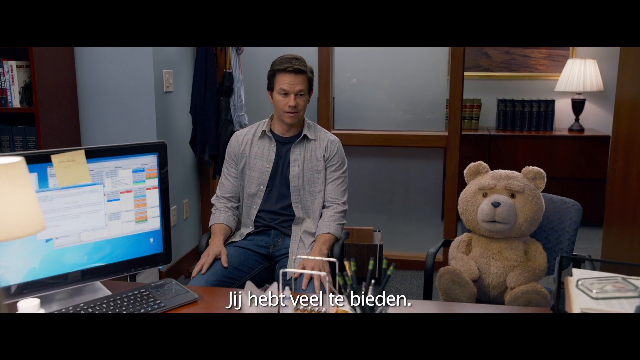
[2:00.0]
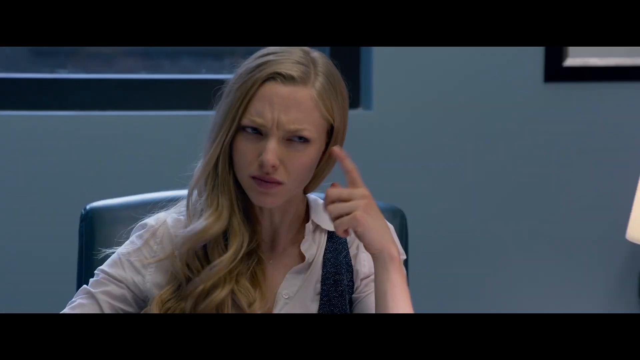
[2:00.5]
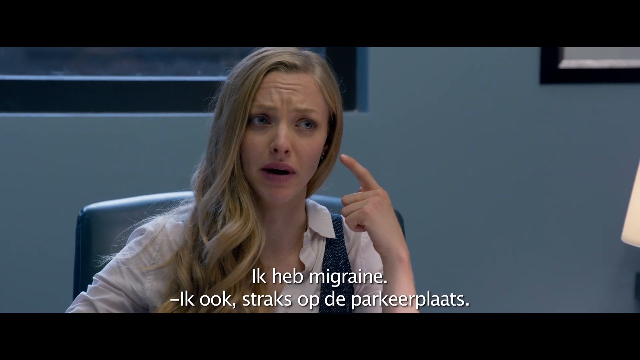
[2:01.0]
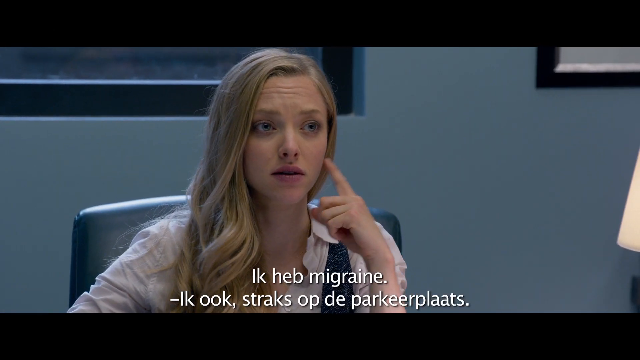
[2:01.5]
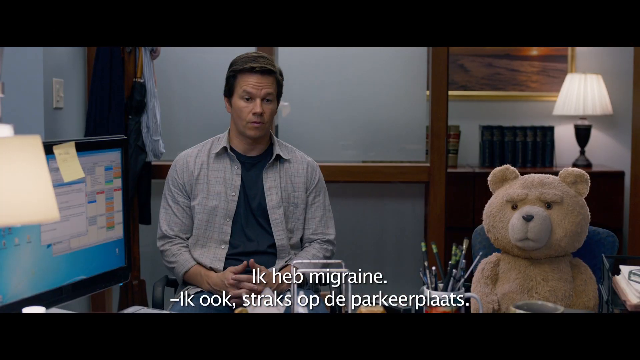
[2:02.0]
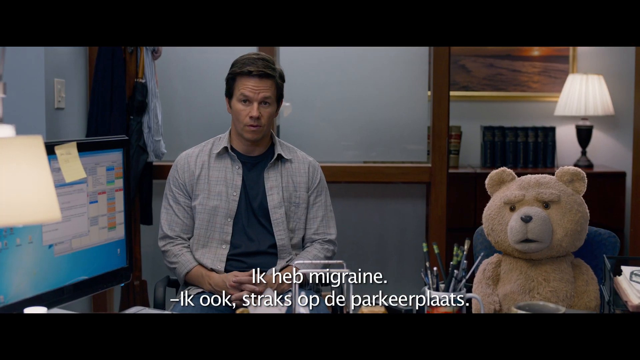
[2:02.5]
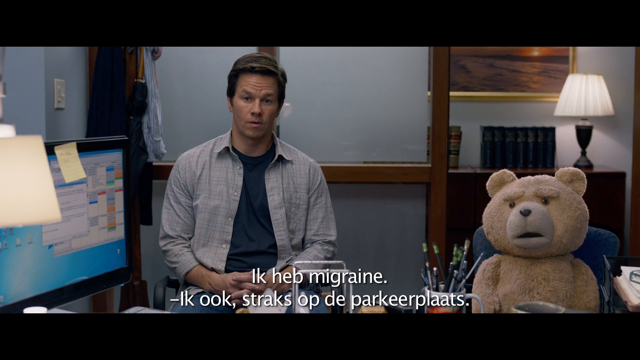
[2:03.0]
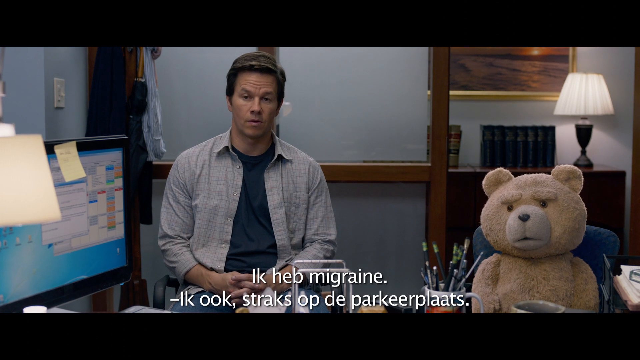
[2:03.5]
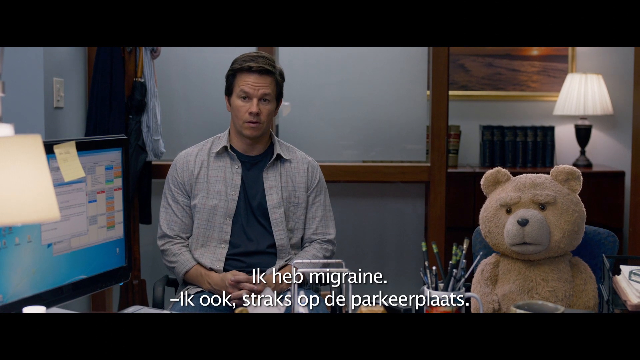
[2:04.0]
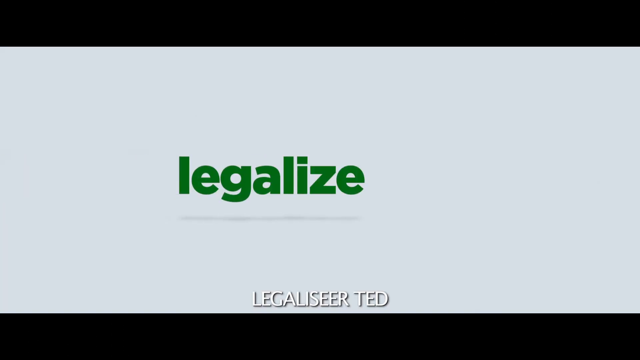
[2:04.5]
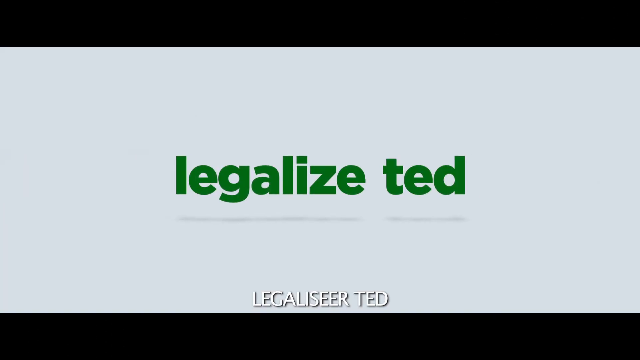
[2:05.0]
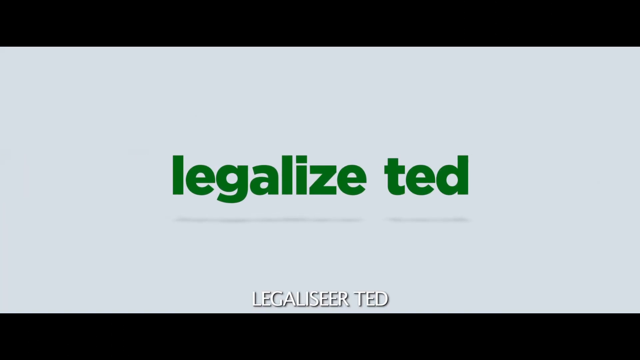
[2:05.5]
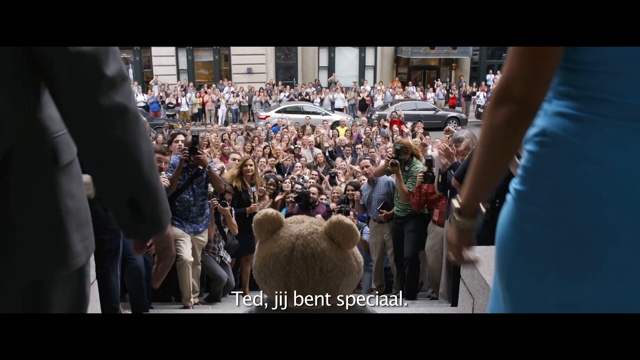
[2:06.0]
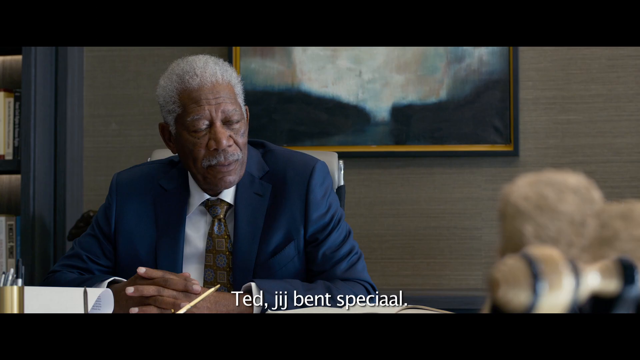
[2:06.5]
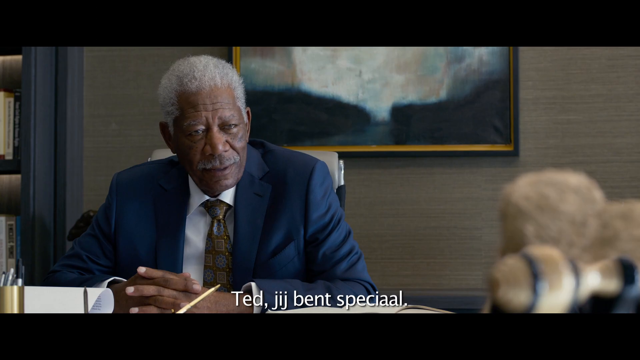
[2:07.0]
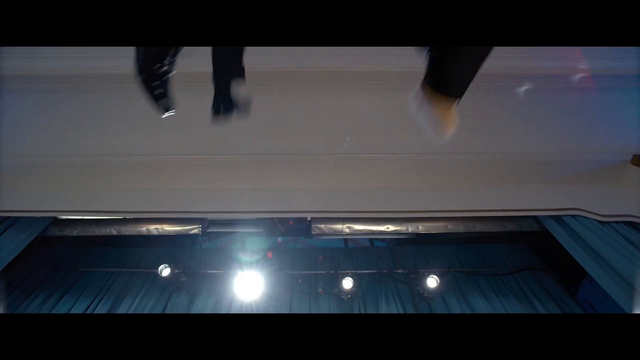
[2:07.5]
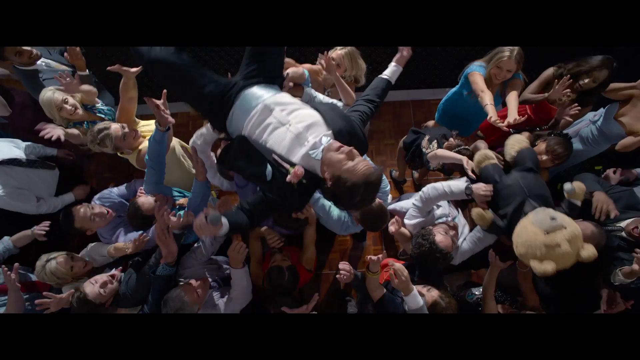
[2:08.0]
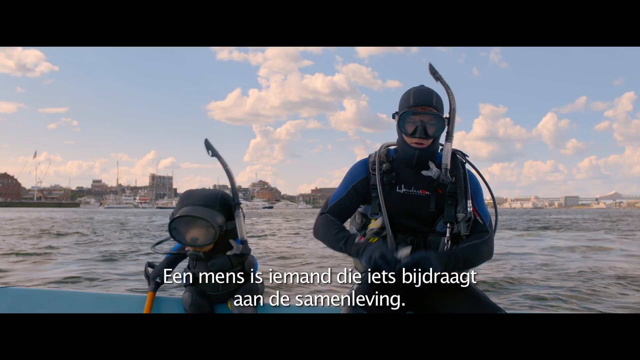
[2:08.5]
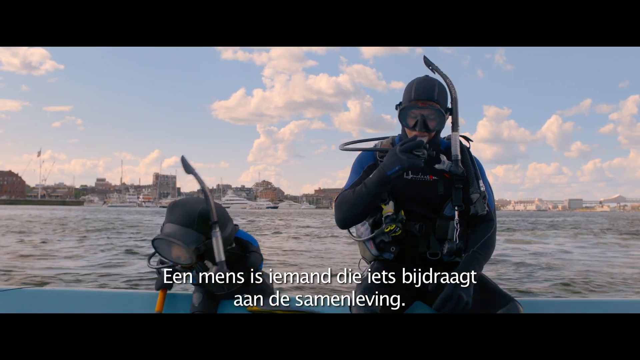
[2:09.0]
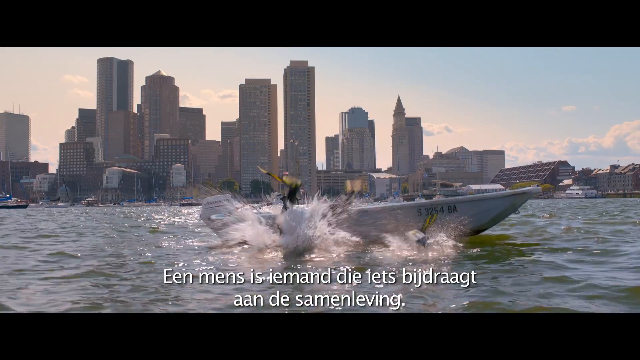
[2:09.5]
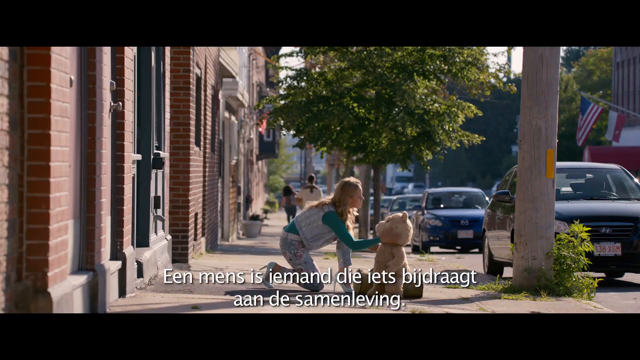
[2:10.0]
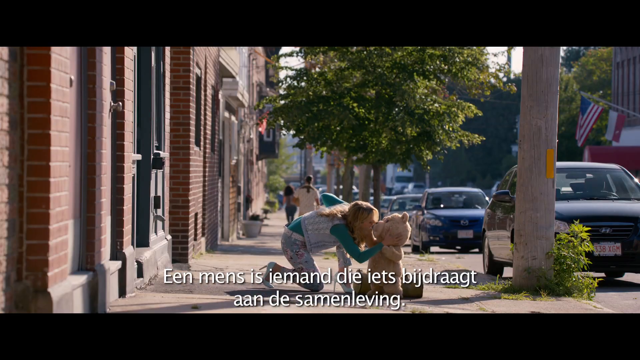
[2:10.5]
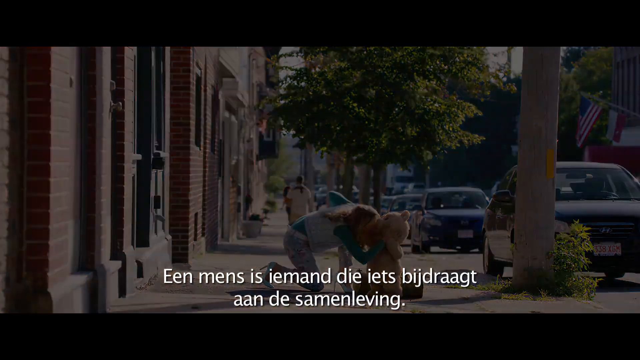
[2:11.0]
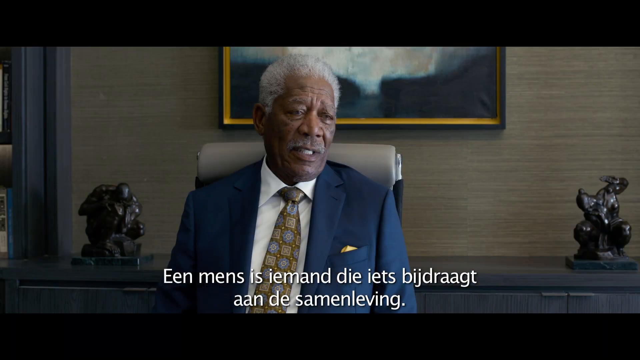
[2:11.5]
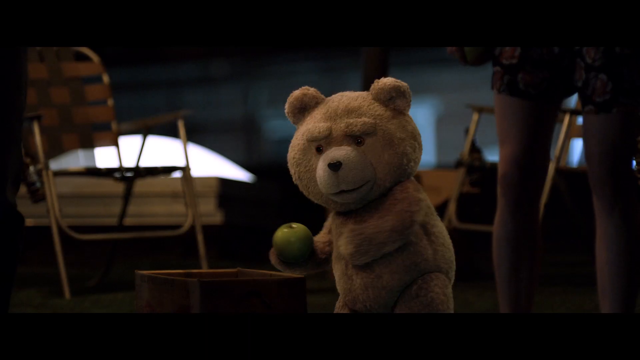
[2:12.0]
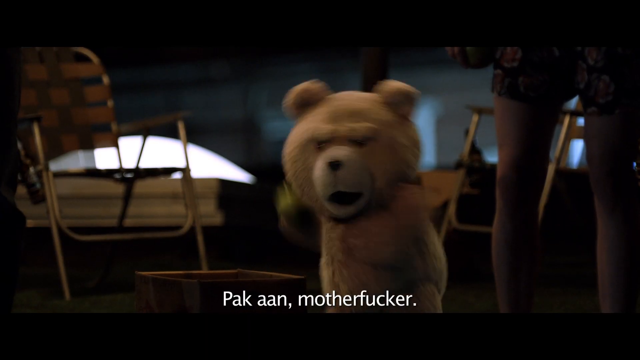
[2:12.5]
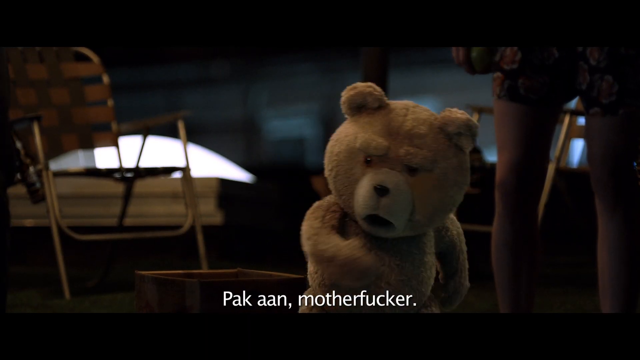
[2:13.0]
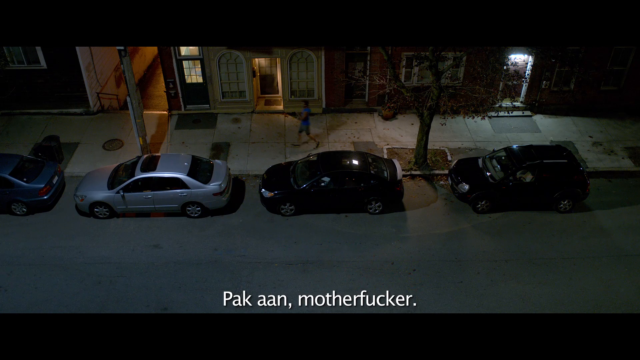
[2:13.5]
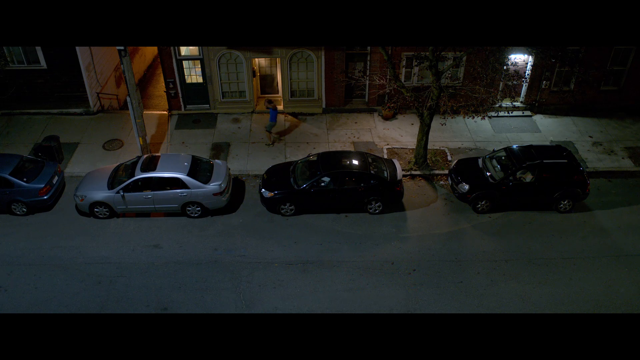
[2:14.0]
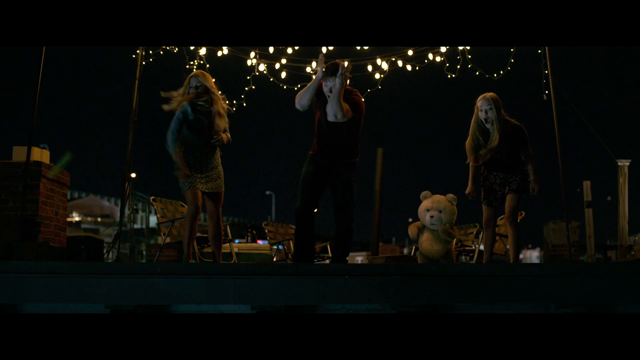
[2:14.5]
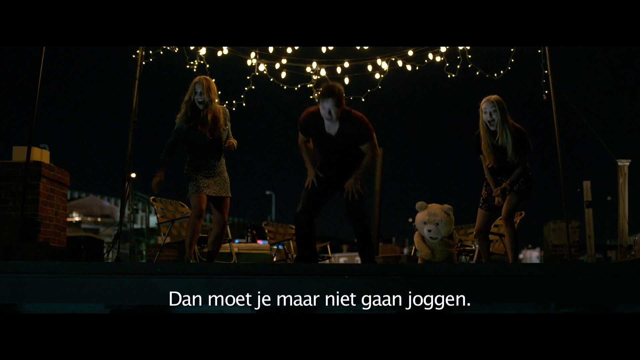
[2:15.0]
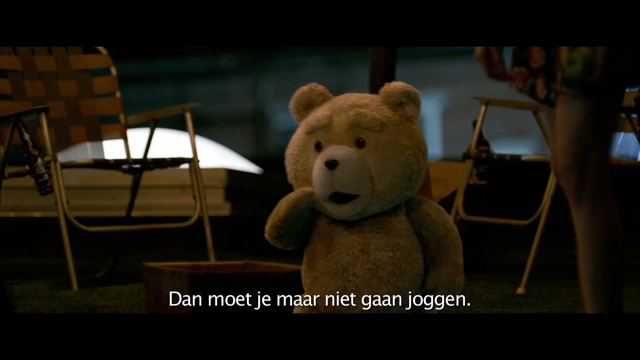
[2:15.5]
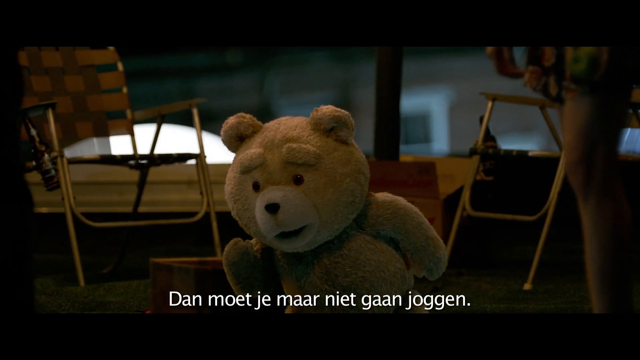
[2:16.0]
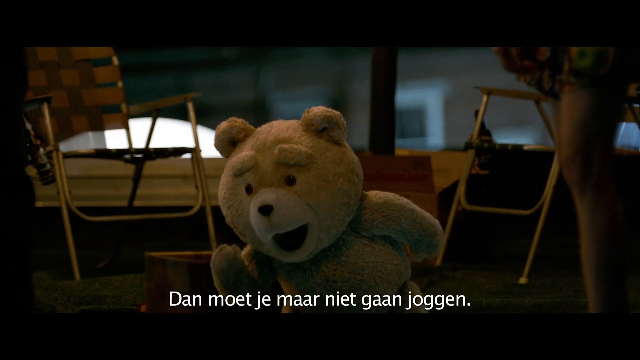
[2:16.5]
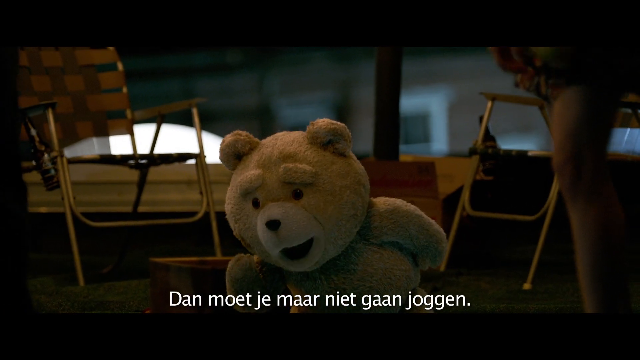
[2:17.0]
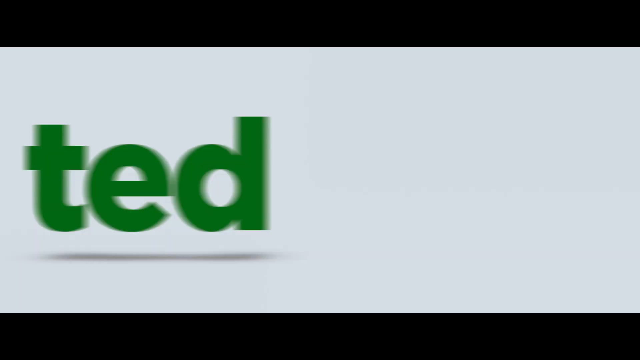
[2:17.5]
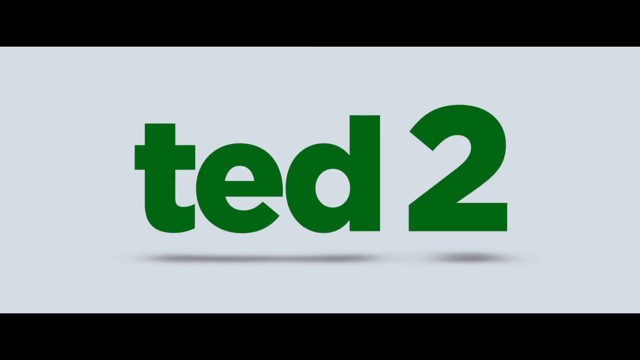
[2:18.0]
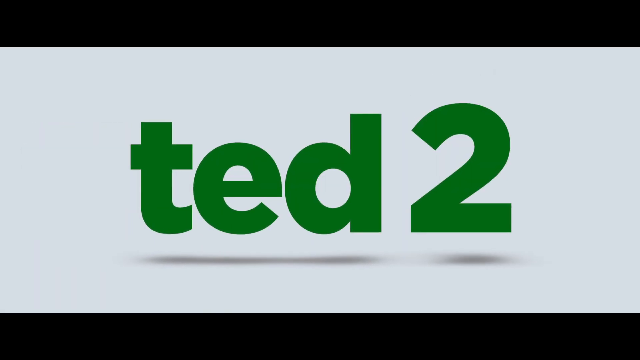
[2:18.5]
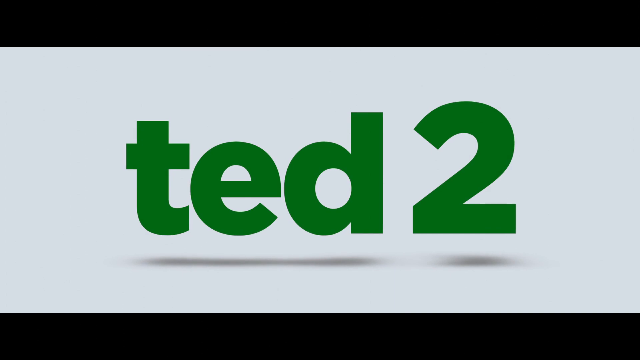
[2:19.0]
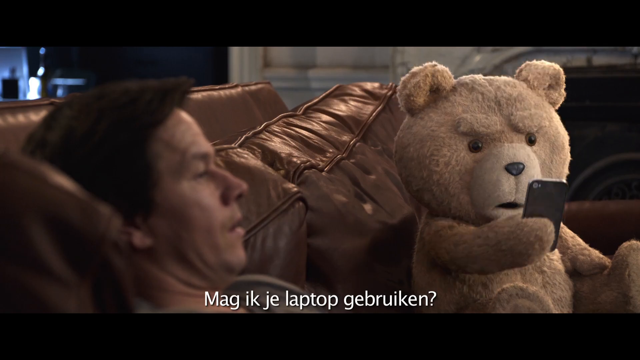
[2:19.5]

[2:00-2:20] The woman behind the desk takes out a bong and takes a hit from it. The view switches to the actor and the teddy bear, and they talk back and forth with her. On a white background, green lowercase text reads "legalize Ted". Then the two walk out; the camera moves as if walking with them, looking out at a crowd of people and reporters as they come out down the steps of an official-looking building. A close-up shows Morgan Freeman, with gray hair, a blue suit, a white button-down and a brown patterned tie, sitting behind a desk and talking to Ted. The two then appear to be thrown out of somewhere, flying through the air and landing on a kind of mosh pit, carried by a crowd of people as at a concert. Next they are scuba diving in scuba gear, going off the side of a boat with the New York City skyline in the background. A street view shows the blonde girl from earlier kneeling down and kissing the teddy bear. There is a brief view of Morgan Freeman behind the desk, then an angry teddy bear throws a green apple off a balcony, and someone below by some cars runs away. Apparently three or four of them are on a rooftop, all throwing apples. After that, green text reading "Ted 2" appears on the white background.